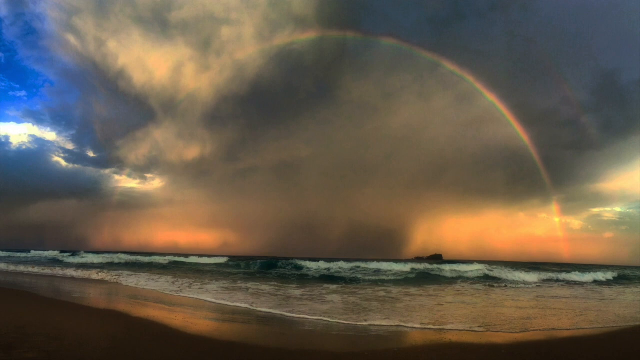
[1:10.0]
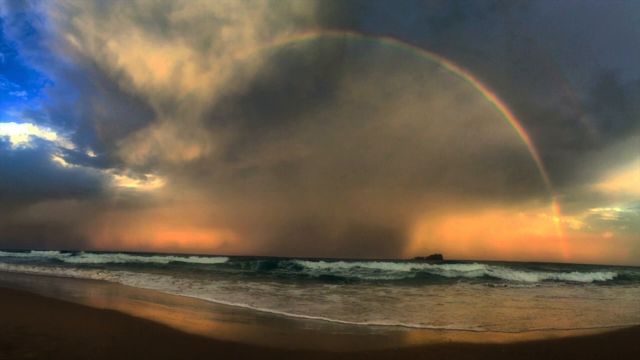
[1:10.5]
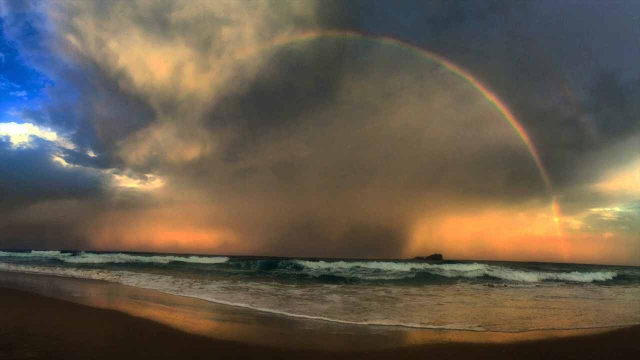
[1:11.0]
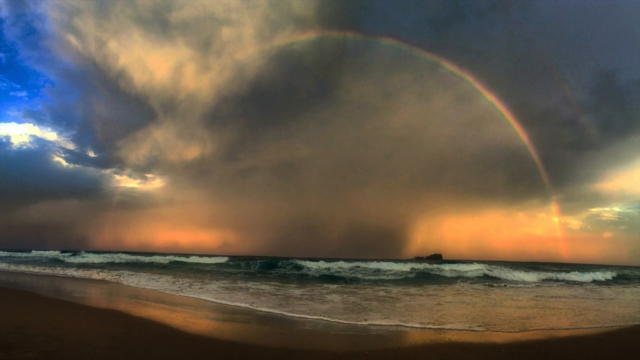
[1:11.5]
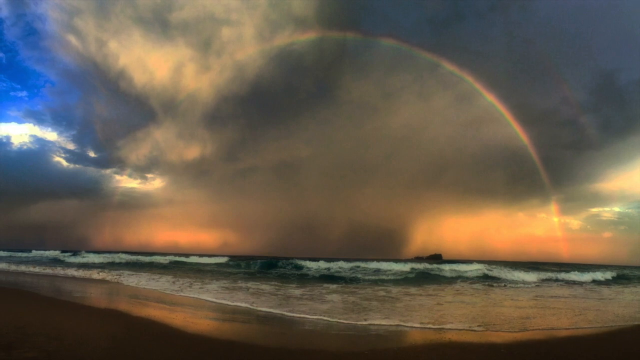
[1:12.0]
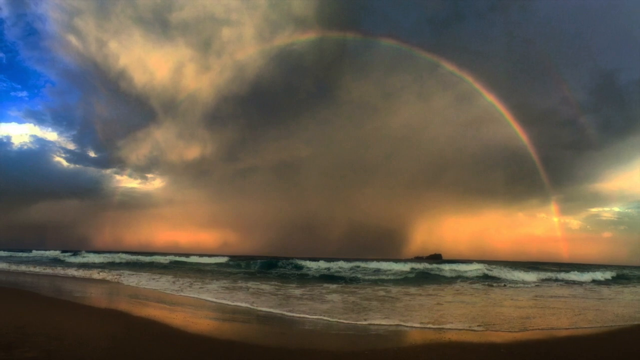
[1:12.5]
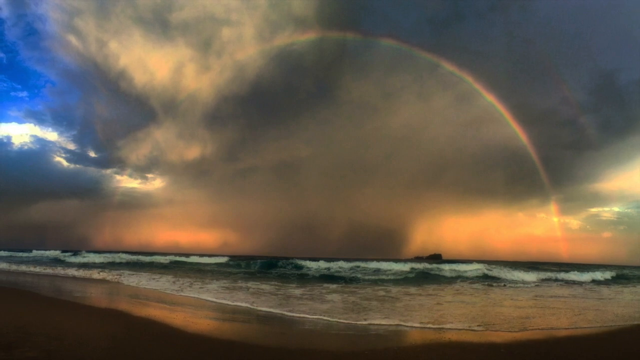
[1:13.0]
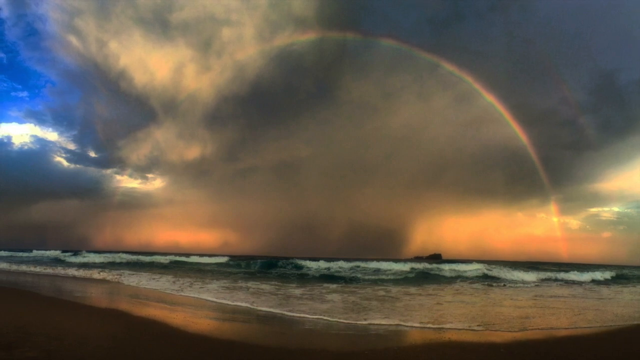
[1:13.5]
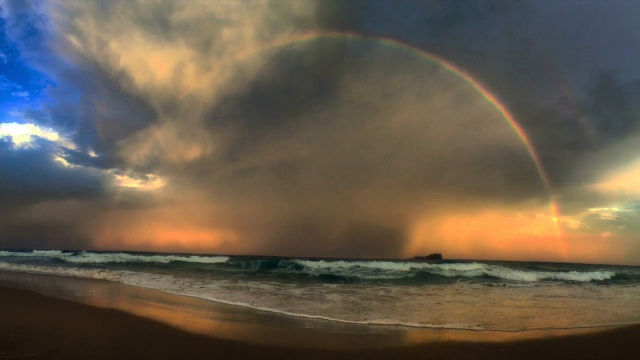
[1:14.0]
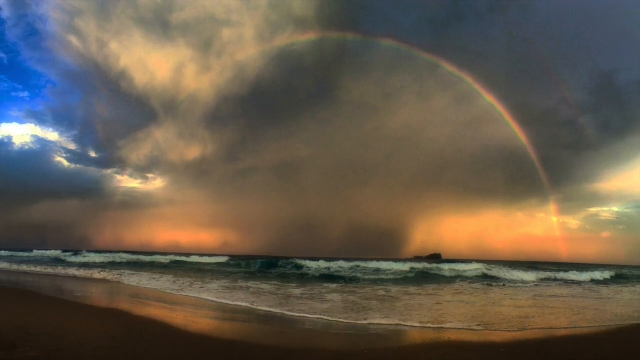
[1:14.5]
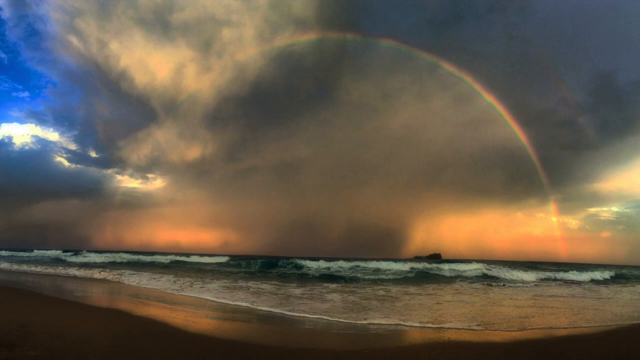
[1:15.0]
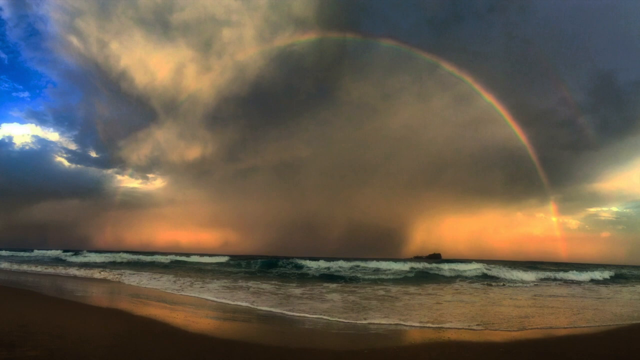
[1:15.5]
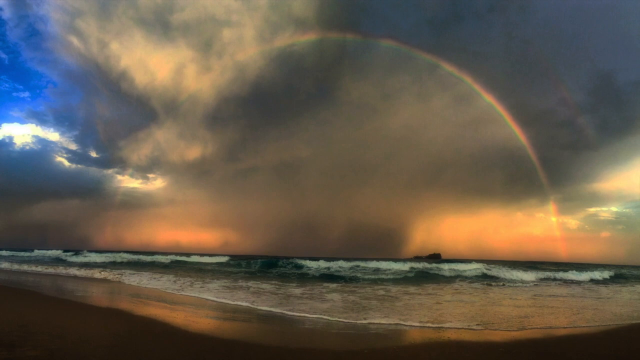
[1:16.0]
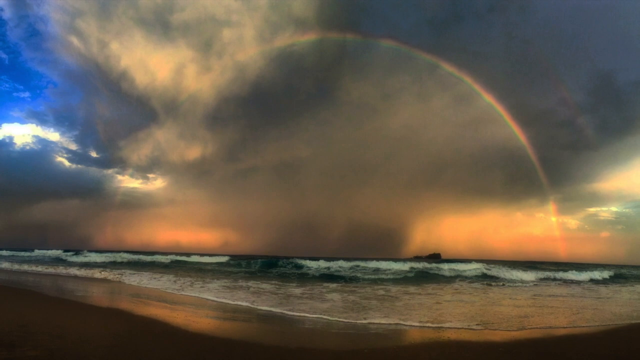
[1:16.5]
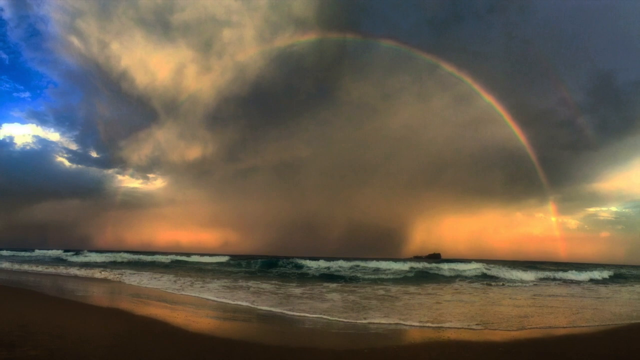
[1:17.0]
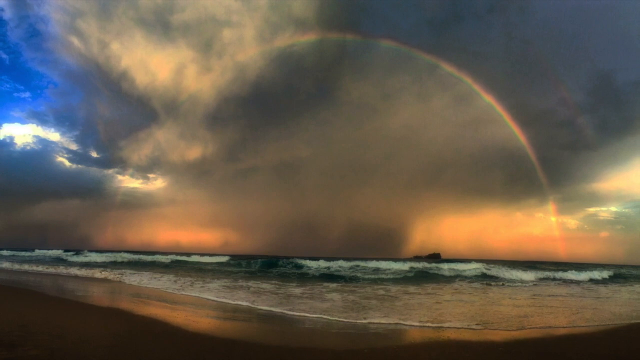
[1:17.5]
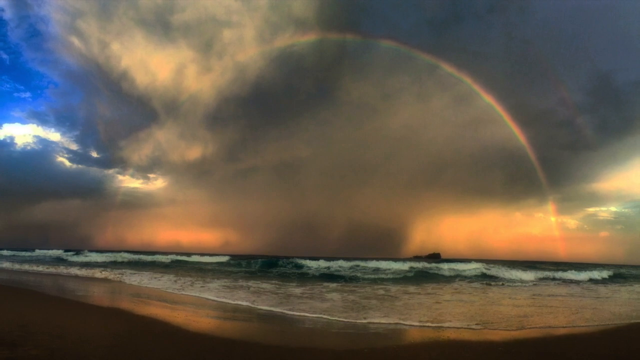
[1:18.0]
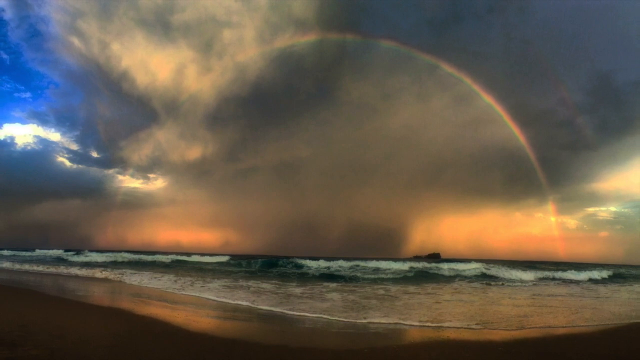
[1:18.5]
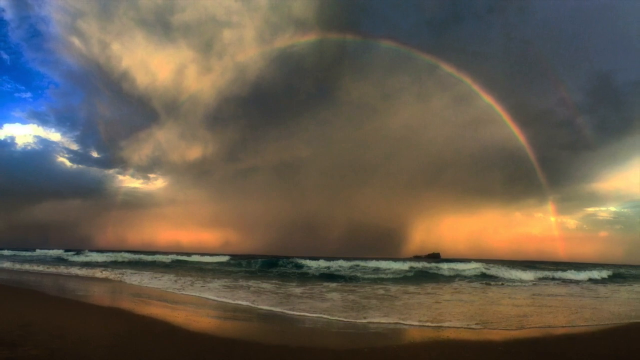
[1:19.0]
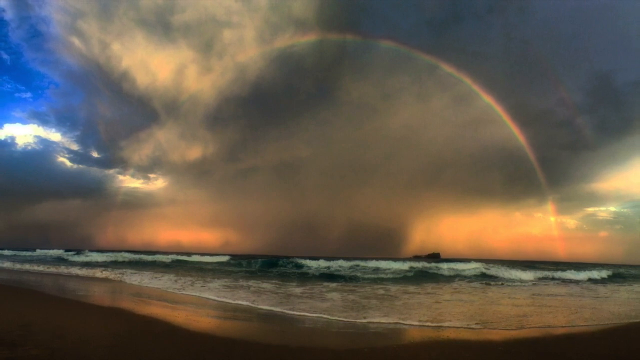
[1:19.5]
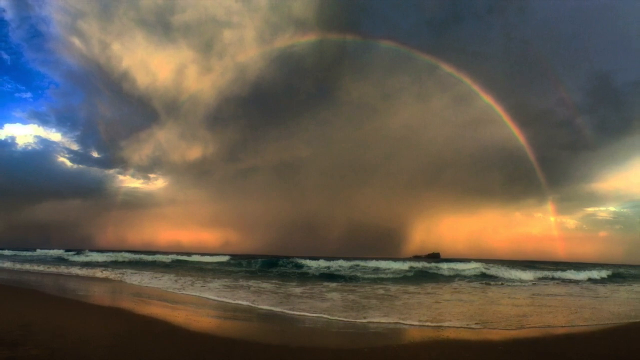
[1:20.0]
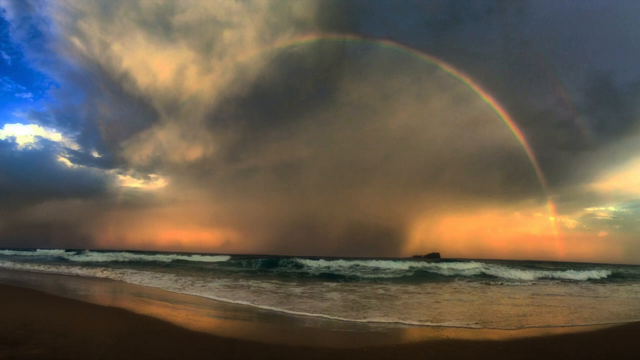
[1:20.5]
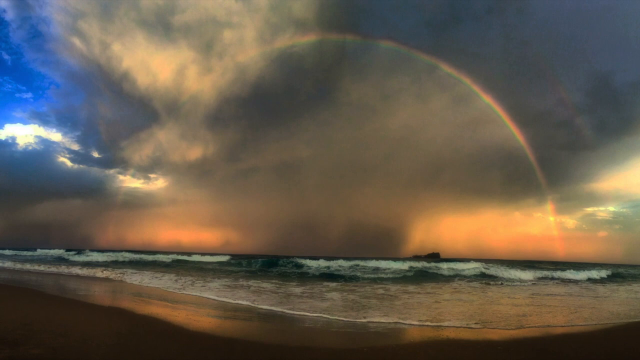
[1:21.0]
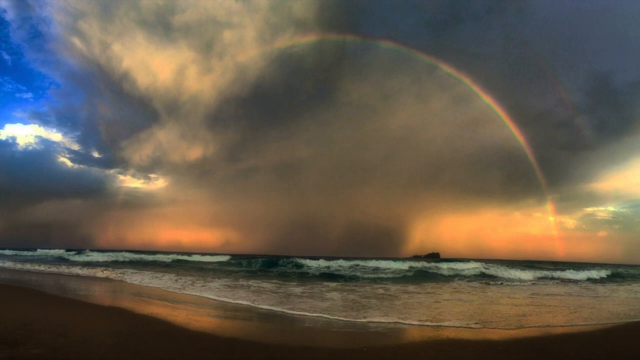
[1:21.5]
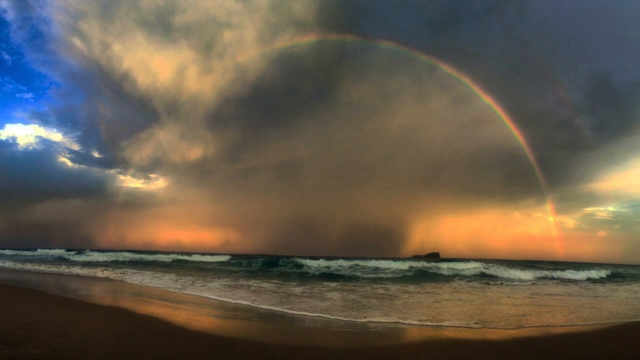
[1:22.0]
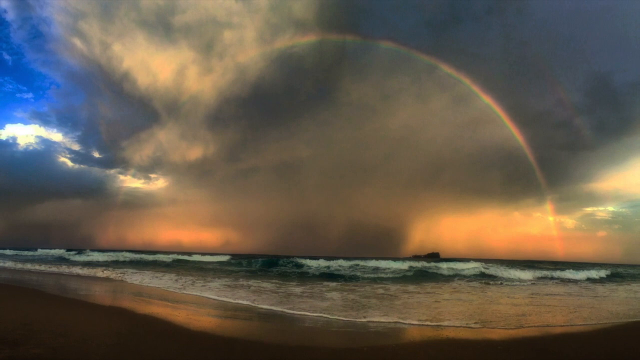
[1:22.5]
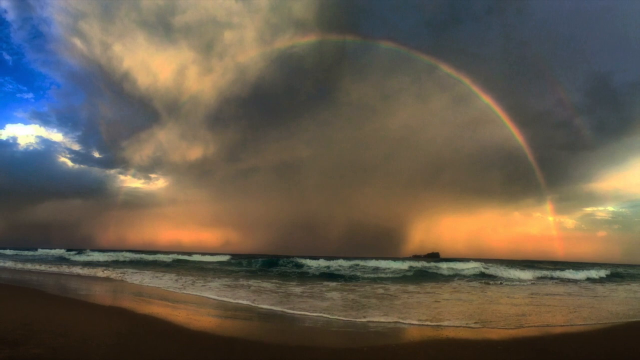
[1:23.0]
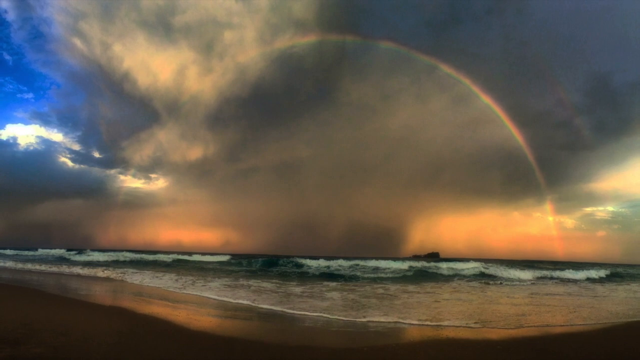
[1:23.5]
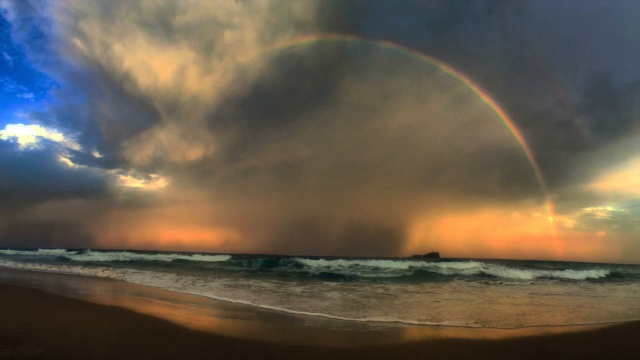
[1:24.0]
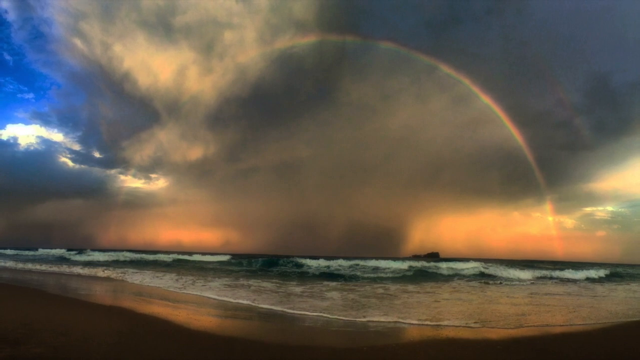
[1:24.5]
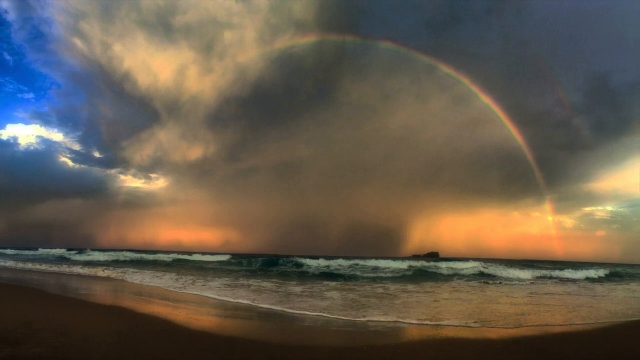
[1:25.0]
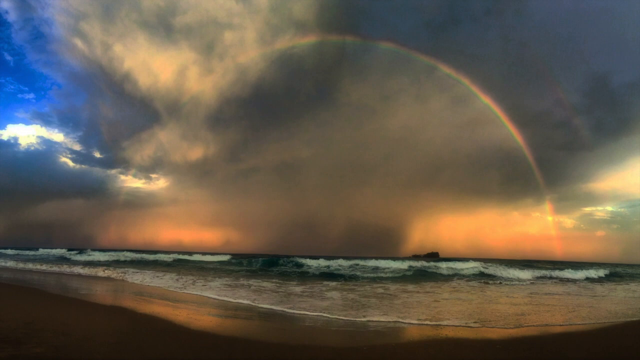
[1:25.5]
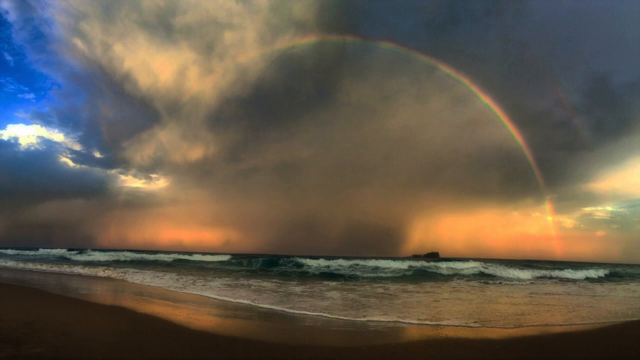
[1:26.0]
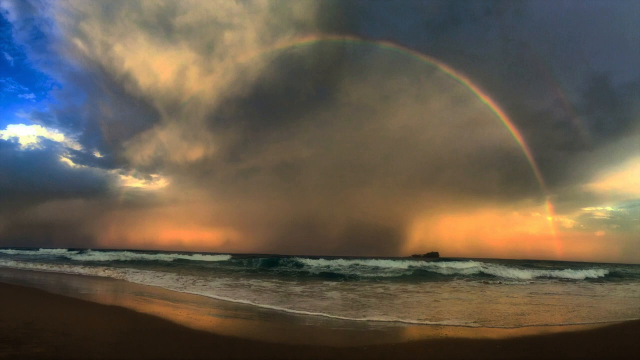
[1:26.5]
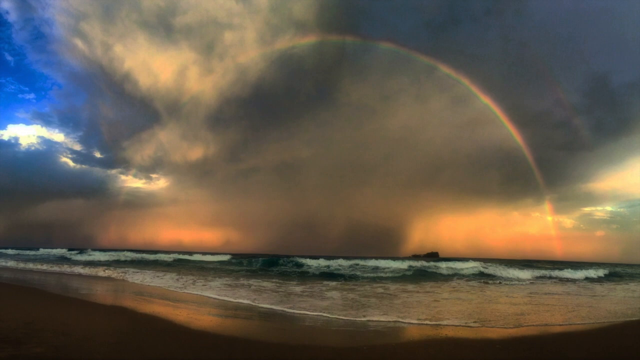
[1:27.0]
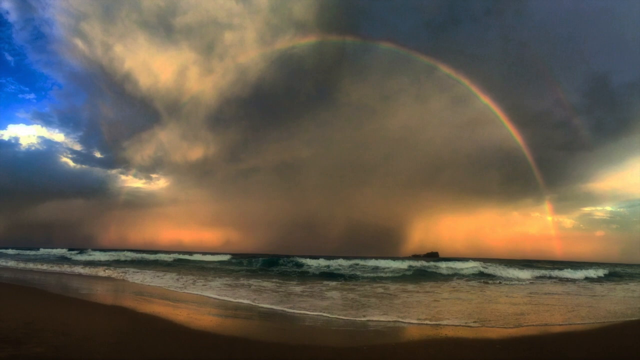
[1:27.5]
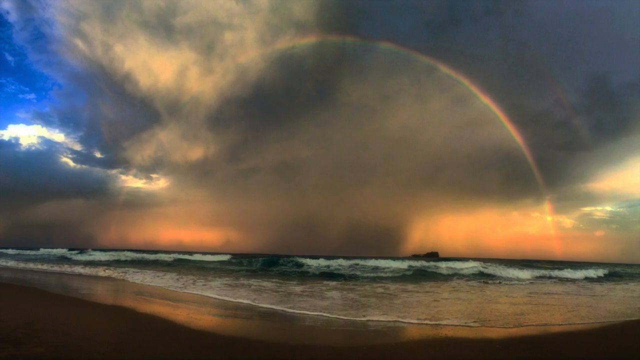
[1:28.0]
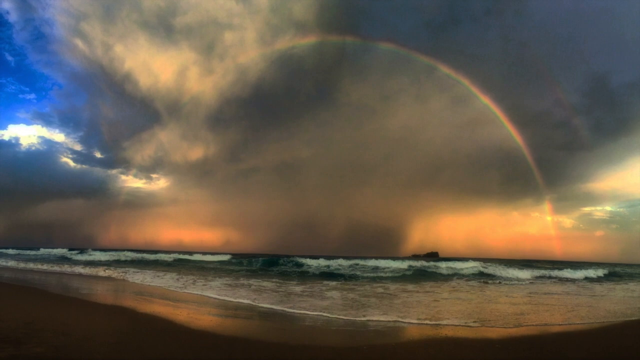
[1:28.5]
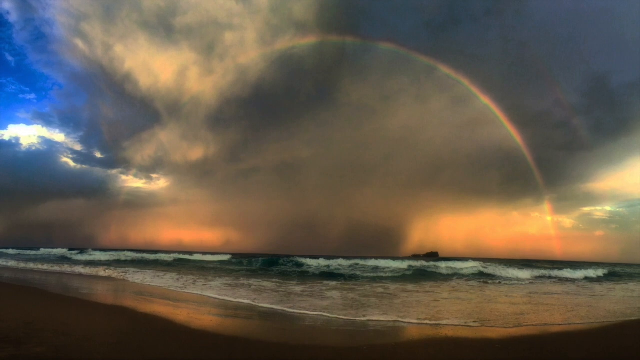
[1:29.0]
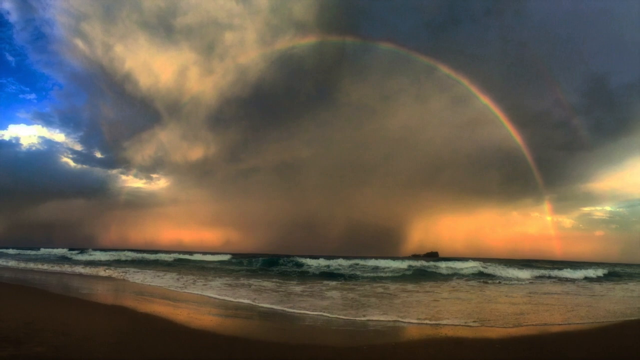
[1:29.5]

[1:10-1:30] A beach and the ocean. The sand in the foreground is dark with red reflections from the sun. Shallow water comes onto the beach, and beyond it a low wave with white foam is starting to break. The very edge of the horizon has red sunlight. In the center, a wide, thick gray water spout rises, looking like a tornado, with gray and white clouds above it. On the left side of the screen there is blue sky, with white clouds below that are backlit by the sun. A perfect arc of a rainbow spans the entire water spout, its red, yellow and green segments clearly visible, and its ends touch the horizon where the sky meets the ocean. On the right side, an area against the red is now turning blue with sunlight.